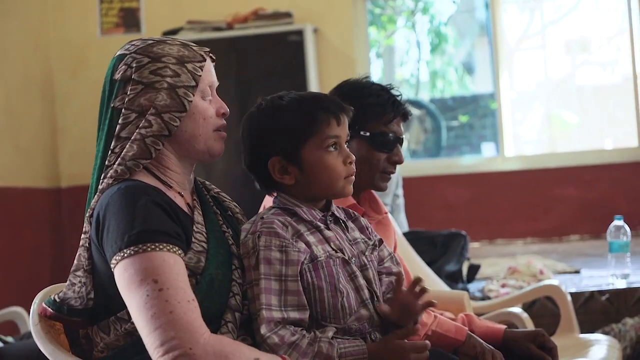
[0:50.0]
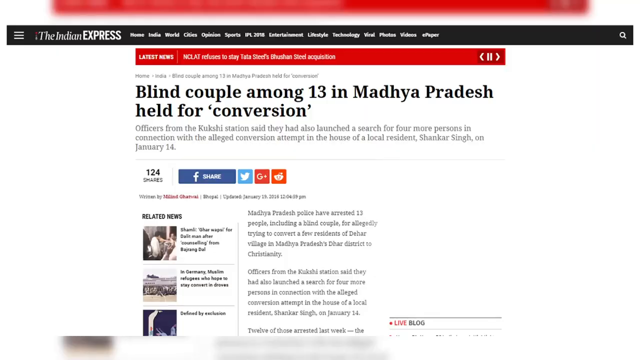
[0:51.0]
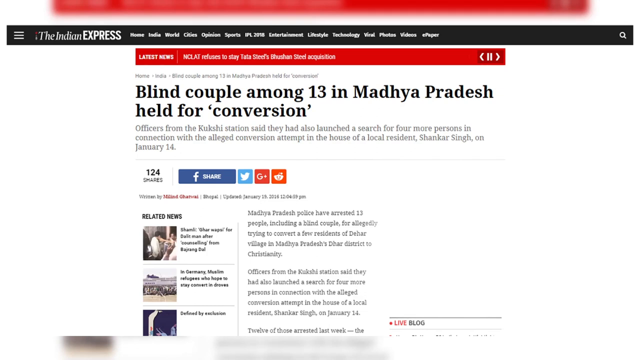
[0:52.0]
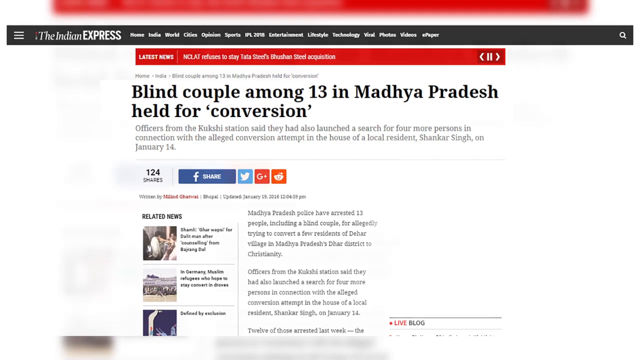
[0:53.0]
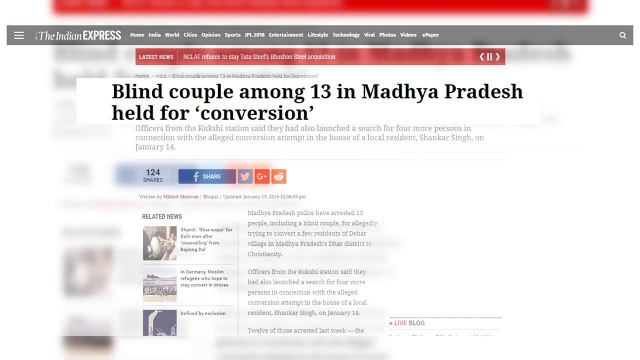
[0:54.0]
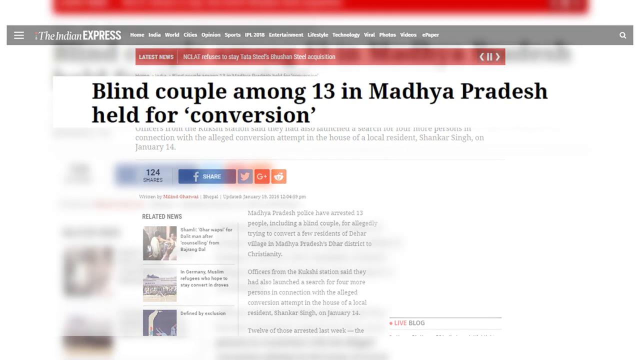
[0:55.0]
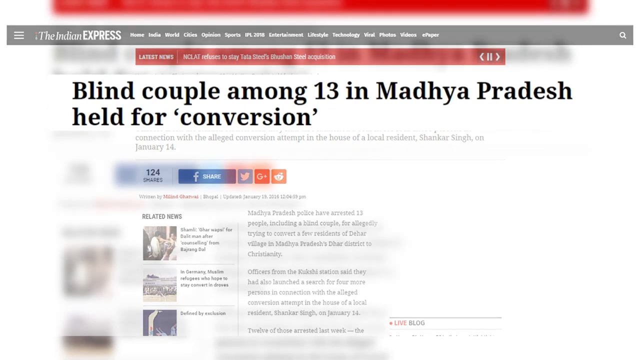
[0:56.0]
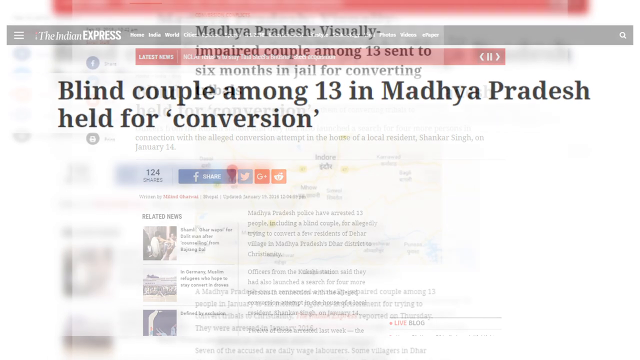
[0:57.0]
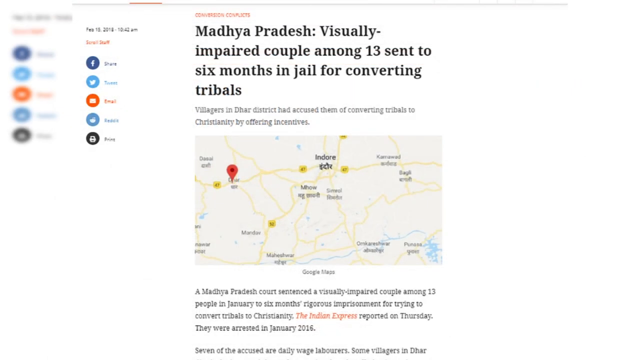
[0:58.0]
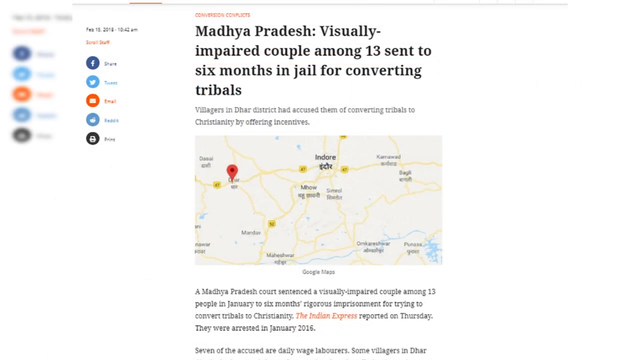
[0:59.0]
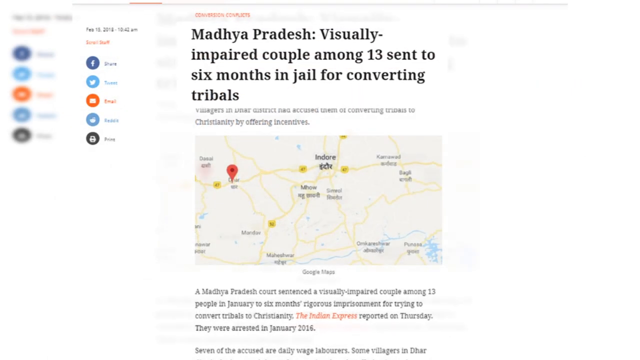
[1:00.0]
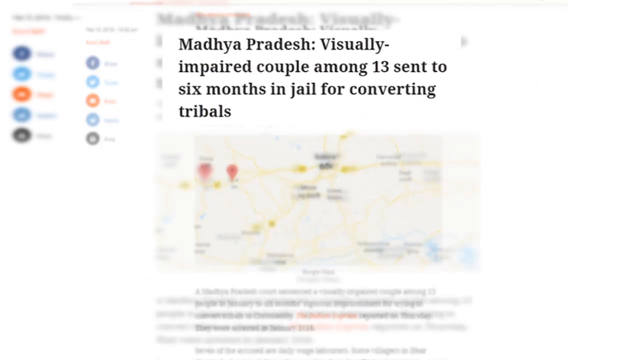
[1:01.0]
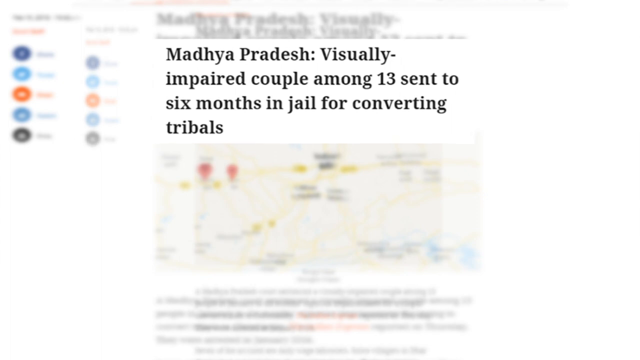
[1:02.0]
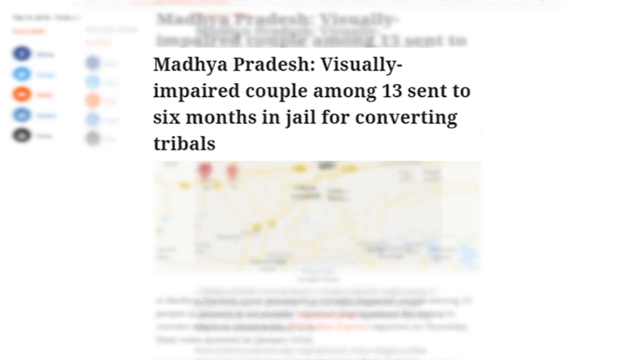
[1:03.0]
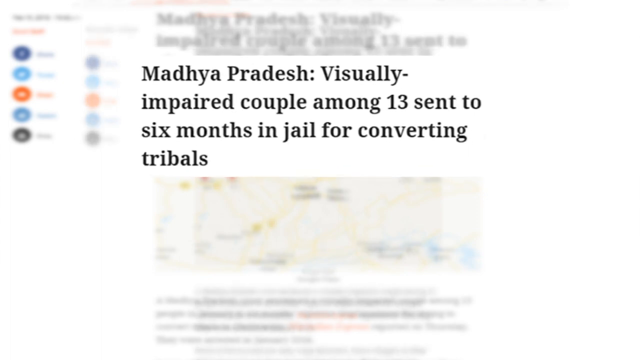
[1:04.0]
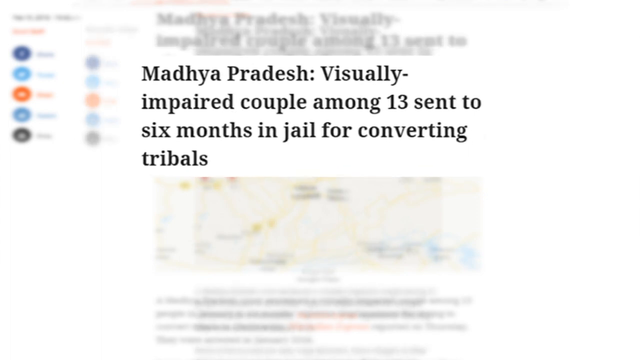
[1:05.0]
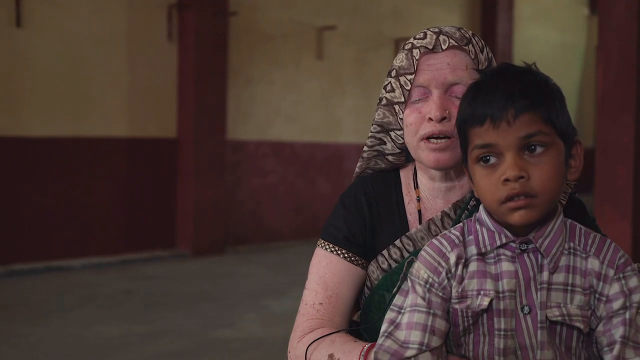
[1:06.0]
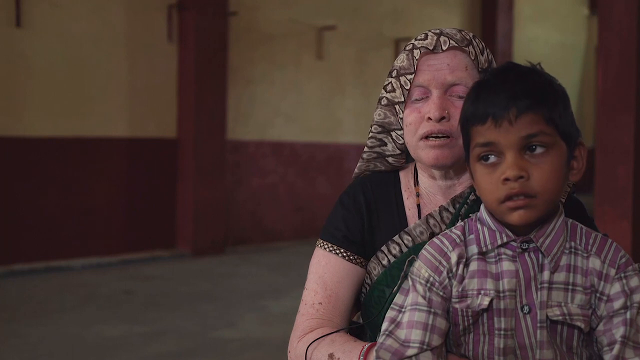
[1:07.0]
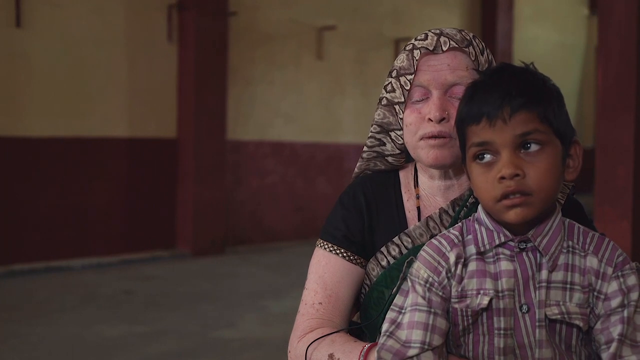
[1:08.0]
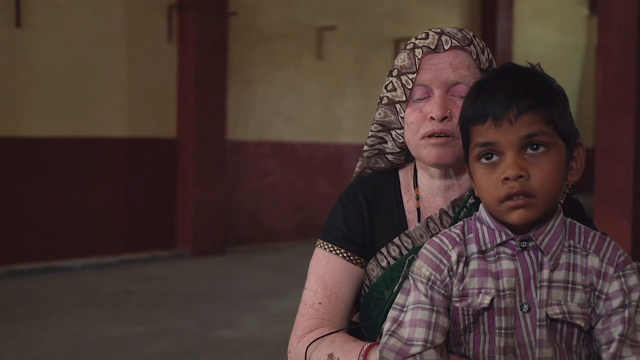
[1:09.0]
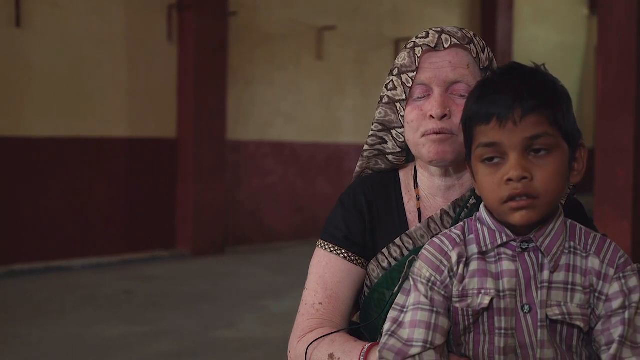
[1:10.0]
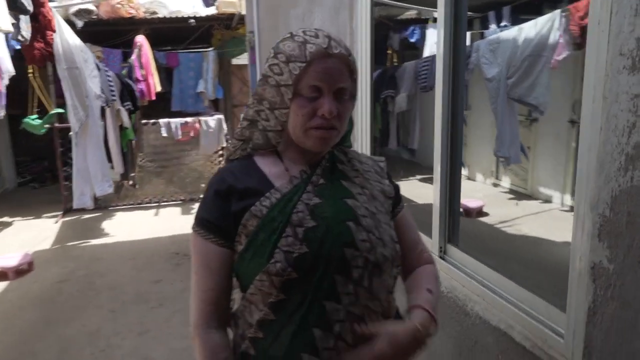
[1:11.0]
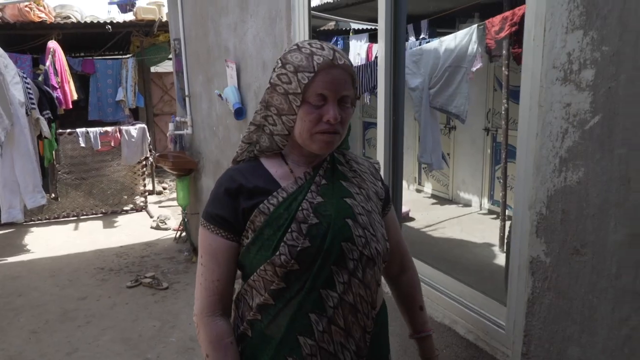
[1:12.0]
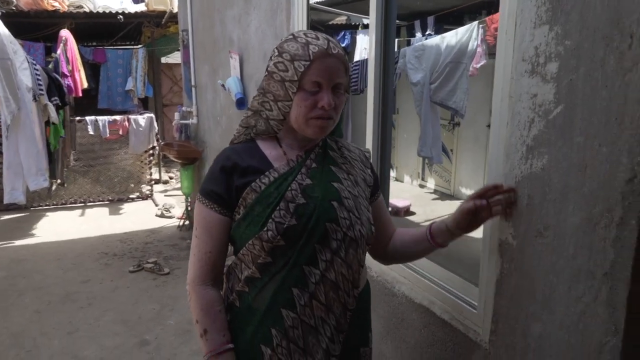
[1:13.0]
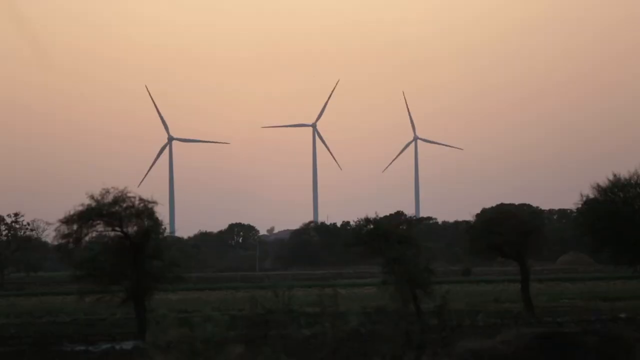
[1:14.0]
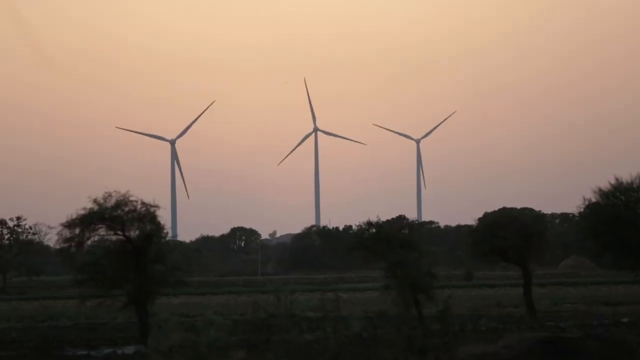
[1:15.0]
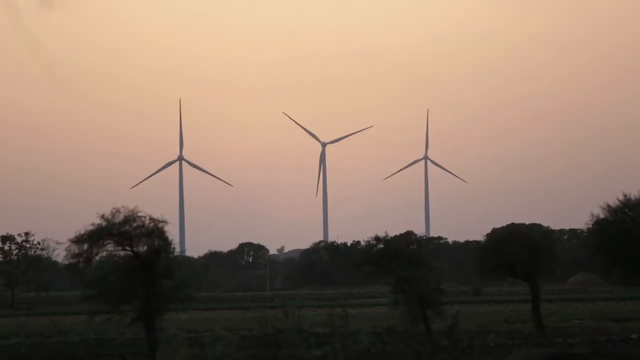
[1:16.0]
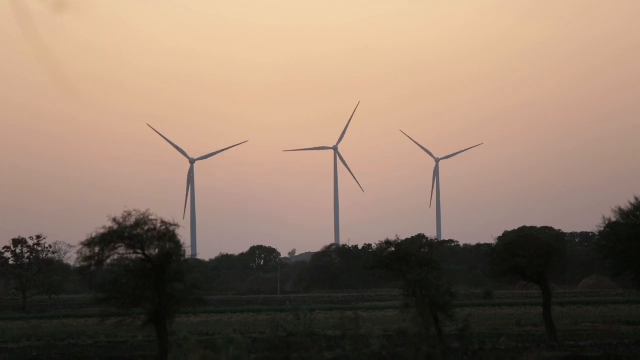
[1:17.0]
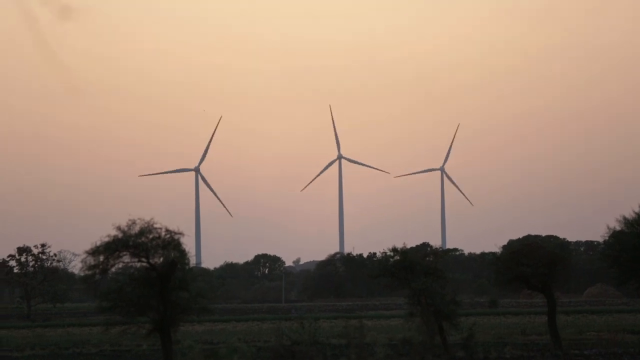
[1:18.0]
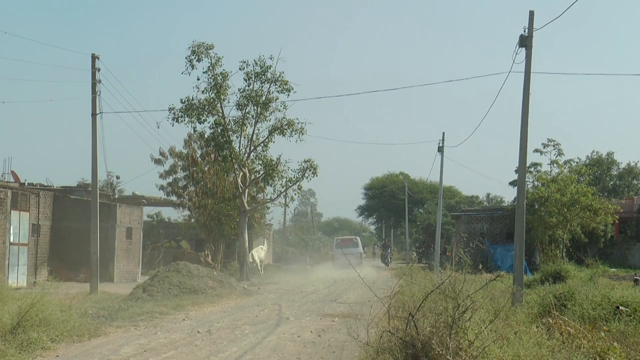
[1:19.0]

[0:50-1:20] The pale woman, the young child and the blind man are seen sitting, shot from their right sides with the camera pointing straight at them. They are looking forward. They seem to be in a room with a window letting some light in, and there seems to be a bottle of water. The man has a cane. Then an Indian Express web page appears with the headline "blind couple among 13 in Madhya Pradesh held for conversion". The article text includes "Madhya Pradesh police have arrested 13 people including a blind couple who are allegedly trying to convert a few residents of Dehar village" and that officers "also launched a search for four more persons in connection with the alleged conversion attempt in the house of a local resident Shankar Singh on January 14th." The headline pops up and gets bigger. A new website shows the headline "Madhya Pradesh visually impaired couple among 13 sent to six months in jail for converting tribals", with the text "Villagers in Dehar district have accused them of converting tribals to Christianity by offering incentives" and "A Madhya Pradesh court sentenced a visually impaired couple among 13 people in January to six months rigorous imprisonment for trying to convert tribals to Christianity." It also says "The Indian Express reported on Thursday" and "they were arrested in January 2016." The view focuses on the headline, zooming down and zooming in. The scene returns to the blind woman talking with the child. Then she is outside, trying to walk a little; there seems to be some clothing hung behind her, it looks like a home, there are some shoes on the ground, and maybe a wash basin. A shot shows three windmills rotating in a field. Then a dirt road with buildings on either side appears, with a person on a motorcycle coming up; there may be a forest on the left, and wires run everywhere.